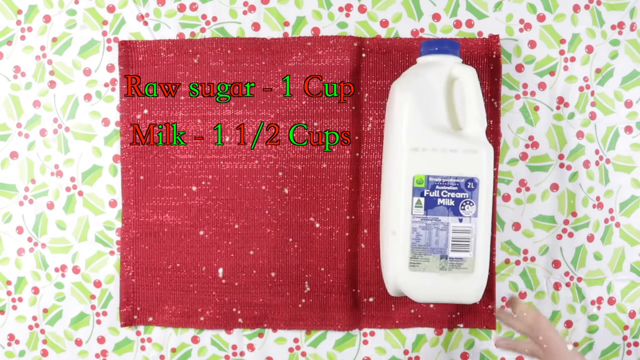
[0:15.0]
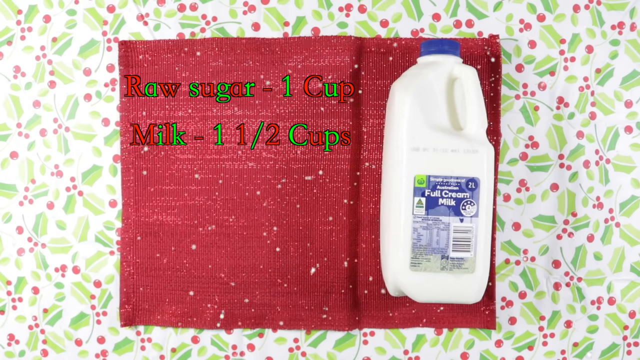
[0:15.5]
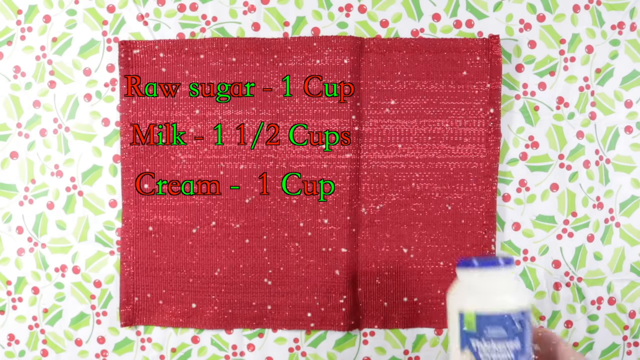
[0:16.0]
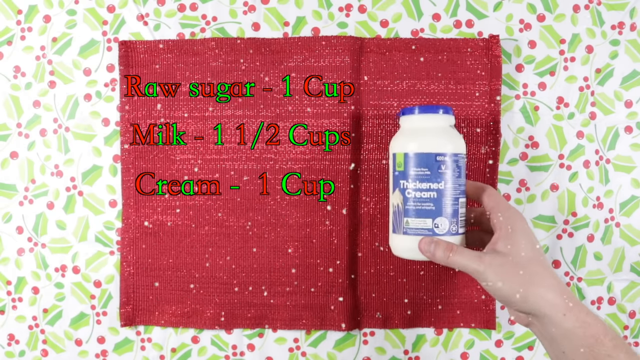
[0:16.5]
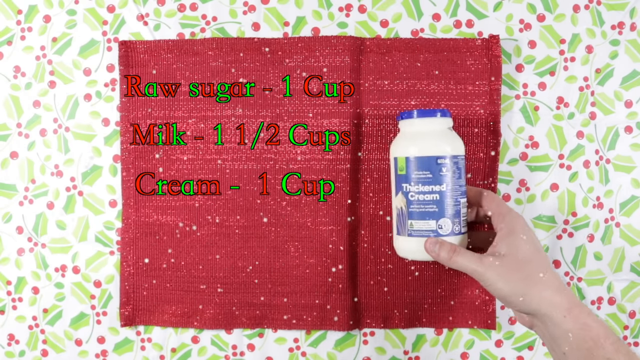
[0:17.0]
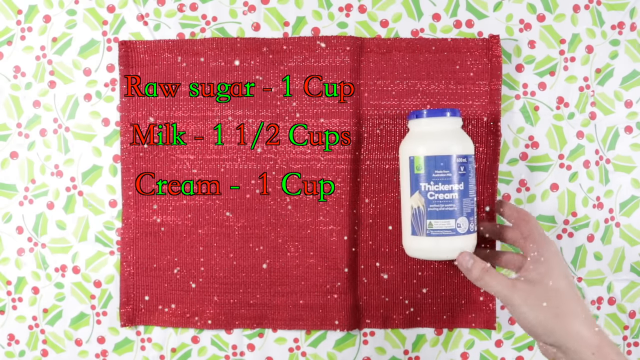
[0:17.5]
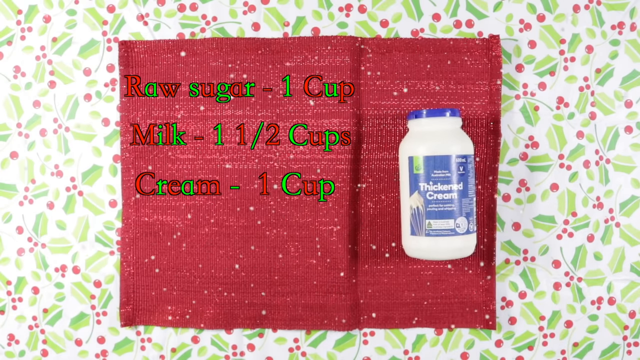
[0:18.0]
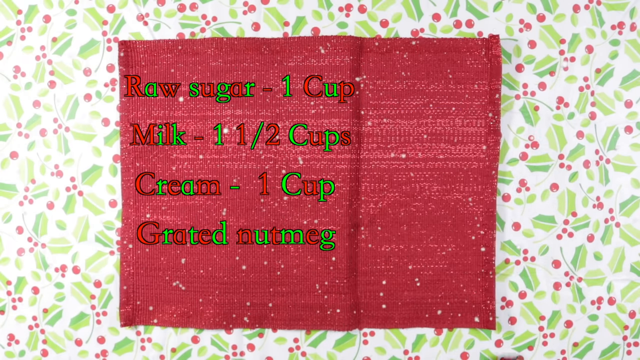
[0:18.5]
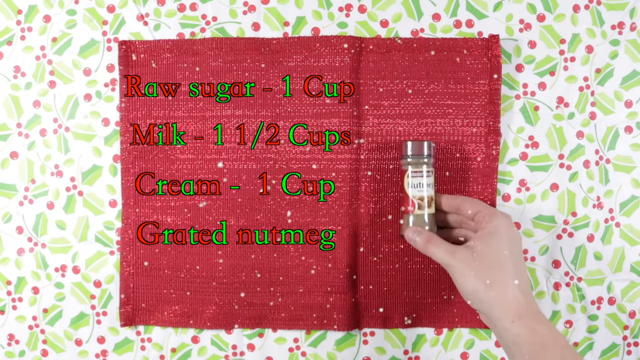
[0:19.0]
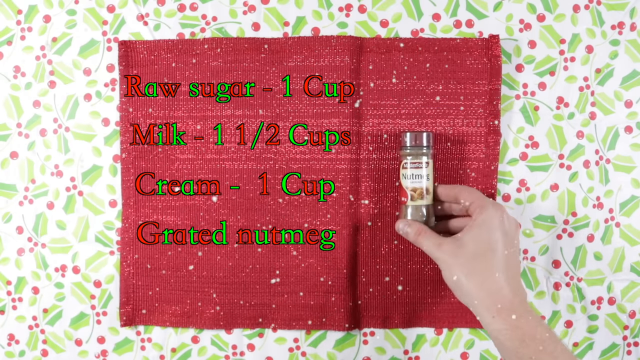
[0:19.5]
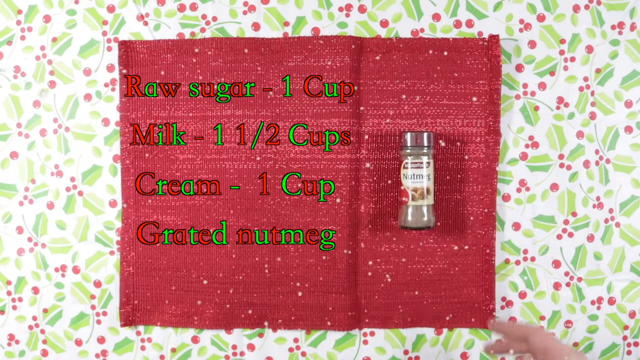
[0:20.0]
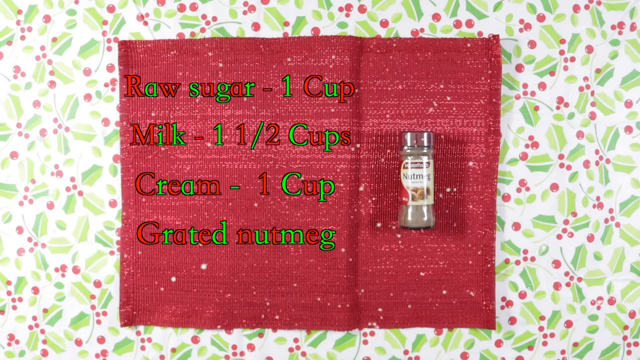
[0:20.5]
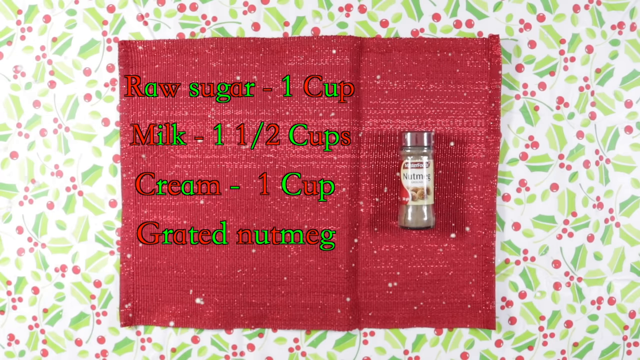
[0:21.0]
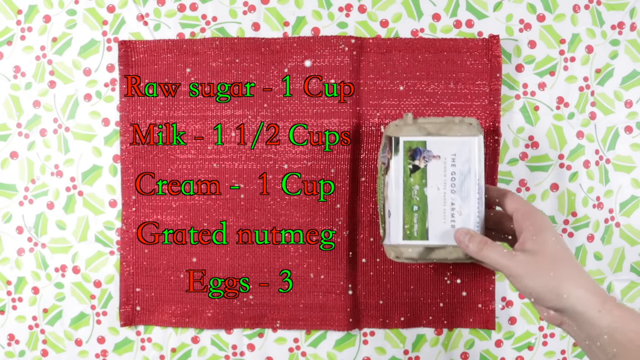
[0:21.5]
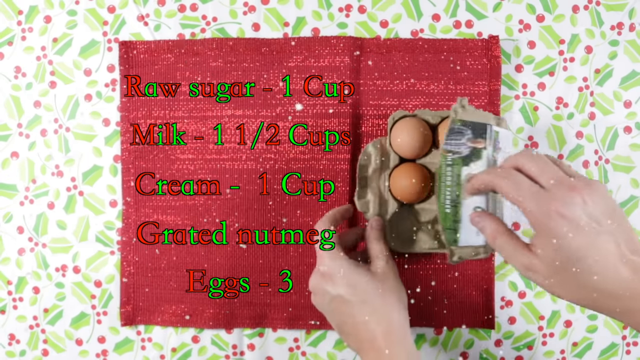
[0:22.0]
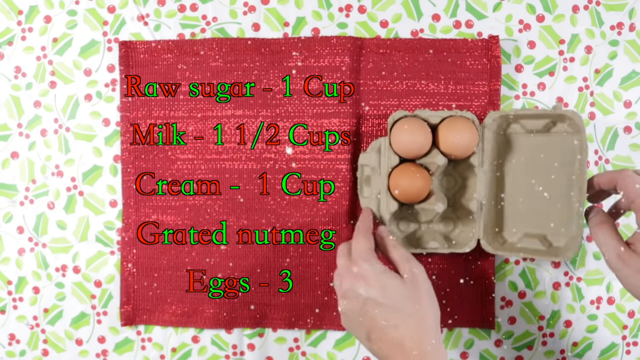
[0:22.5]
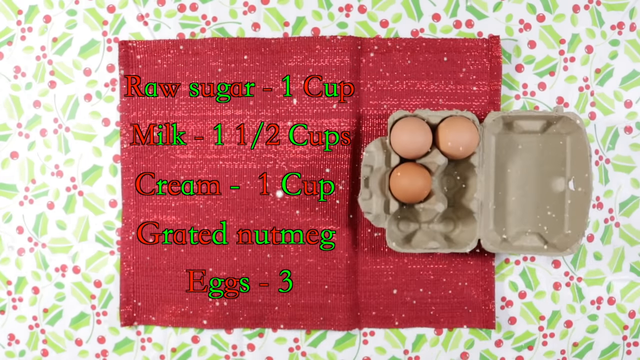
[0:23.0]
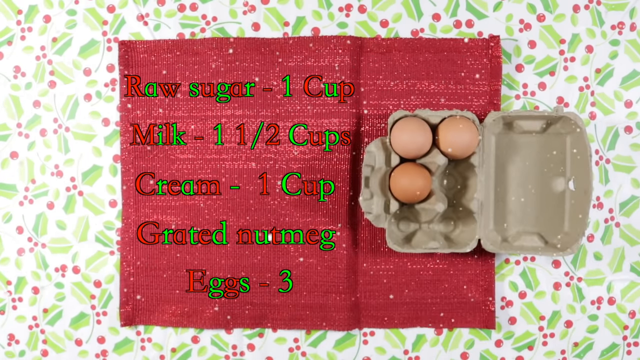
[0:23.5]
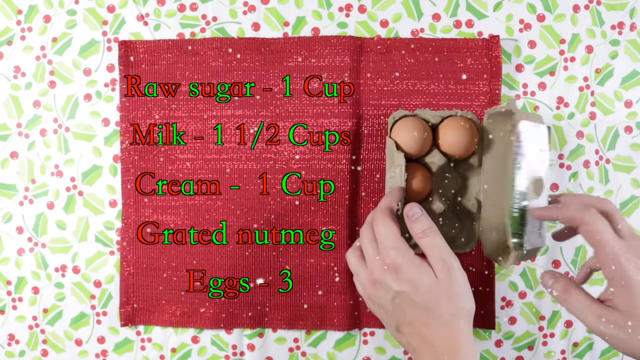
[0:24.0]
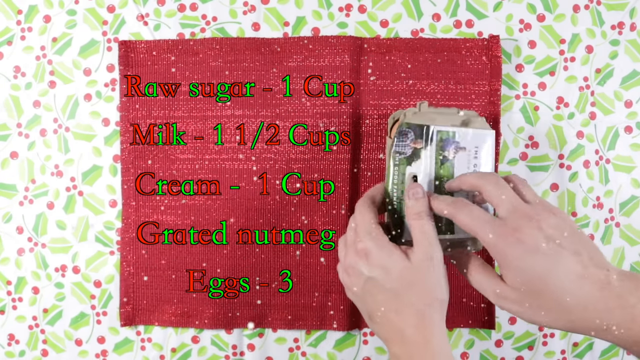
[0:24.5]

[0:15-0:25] The milk rests on the mat; it is a small, perhaps half-gallon container with a blue tag and cap, and it says "Full Cream Milk" on the front. The motion graphic of snow continues in the background. The hand lays down a bottle that resembles a pill bottle, and "Cream One Cup" appears at the side. The hand then lays down a small spice bottle, and "Grated Nutmeg" appears on the list to the left. Next the hand lays down a small package that appears to be a paper container, with a white label on a green background under the title, and "Eggs Three" appears on the left. The hands open the container, which is a half container, showing three brown eggs arranged in its top left.